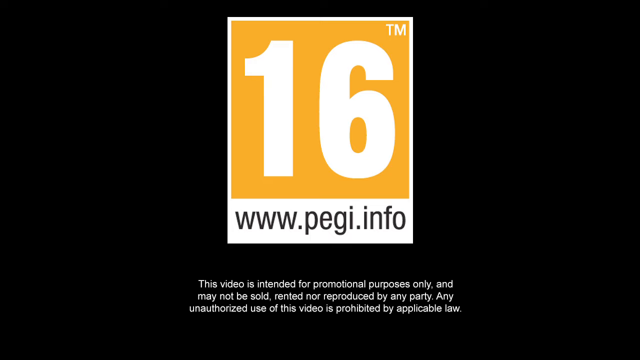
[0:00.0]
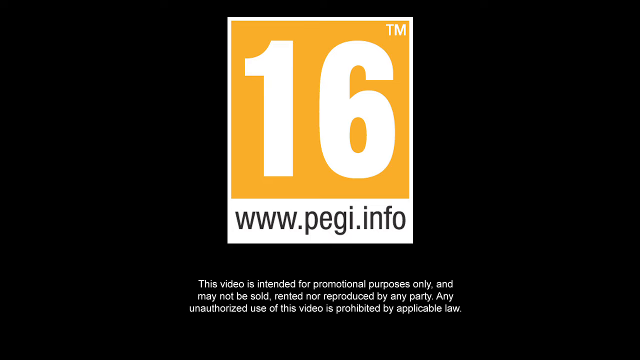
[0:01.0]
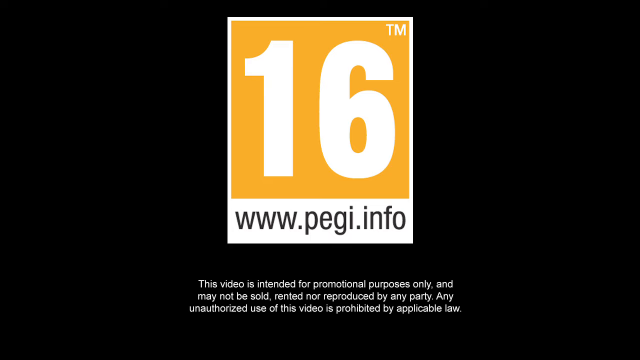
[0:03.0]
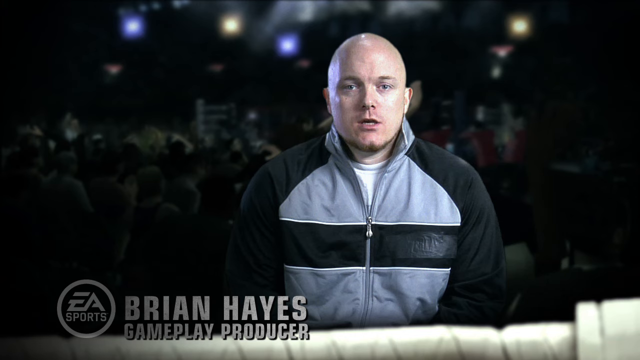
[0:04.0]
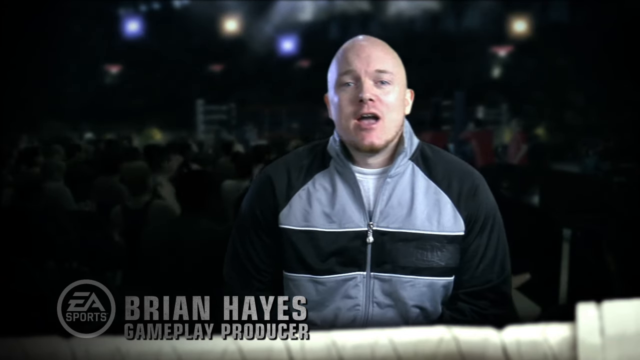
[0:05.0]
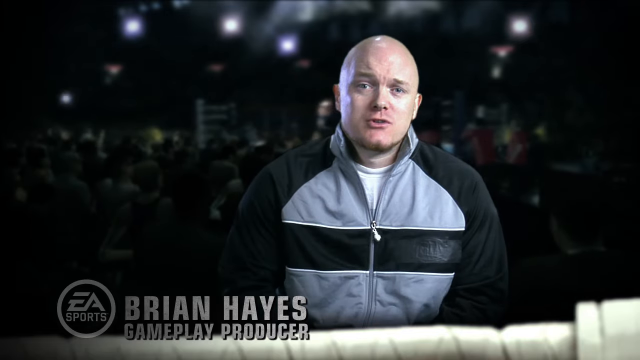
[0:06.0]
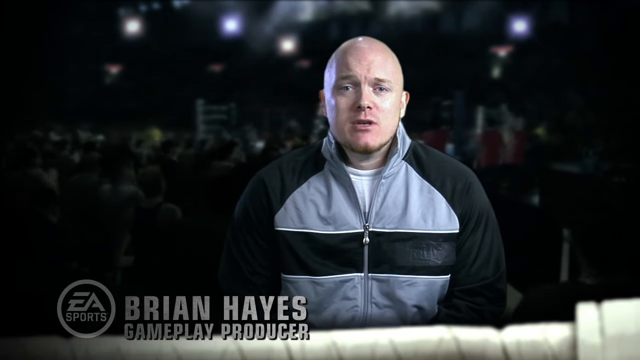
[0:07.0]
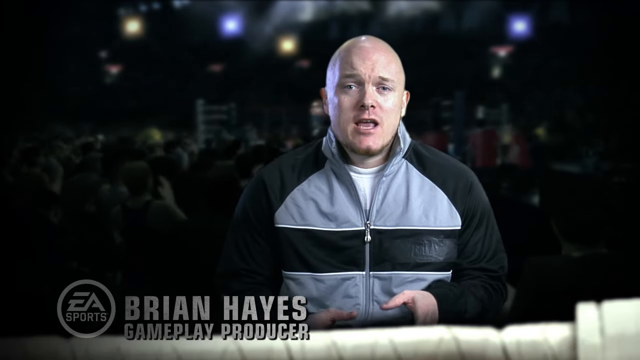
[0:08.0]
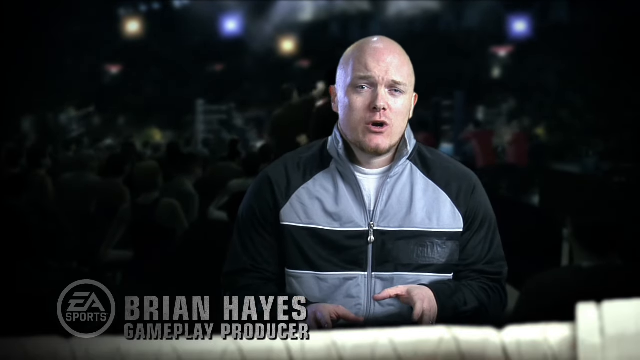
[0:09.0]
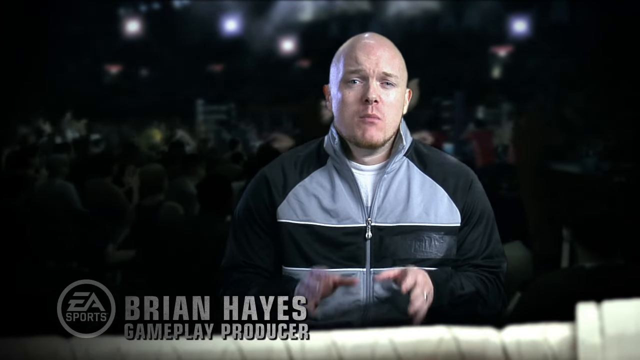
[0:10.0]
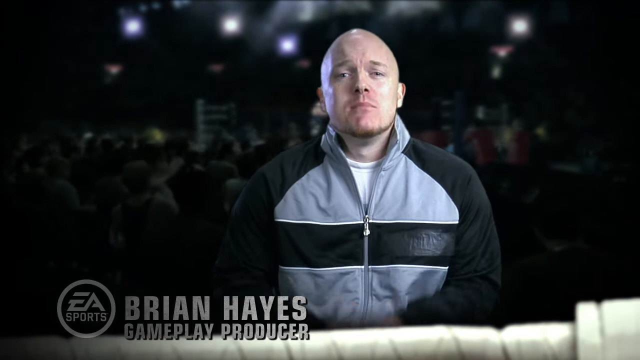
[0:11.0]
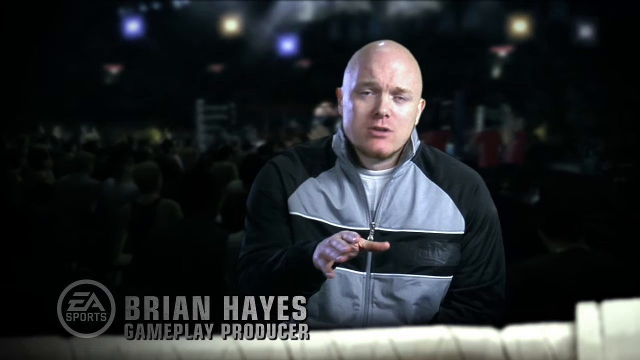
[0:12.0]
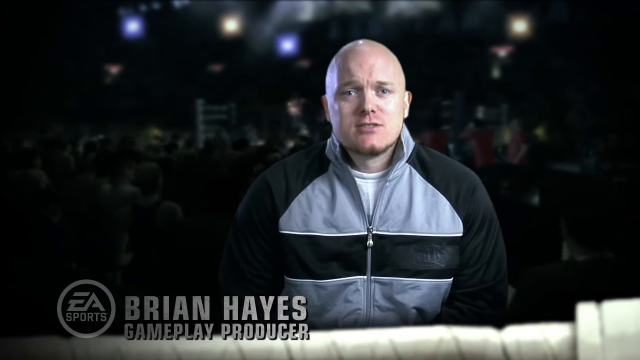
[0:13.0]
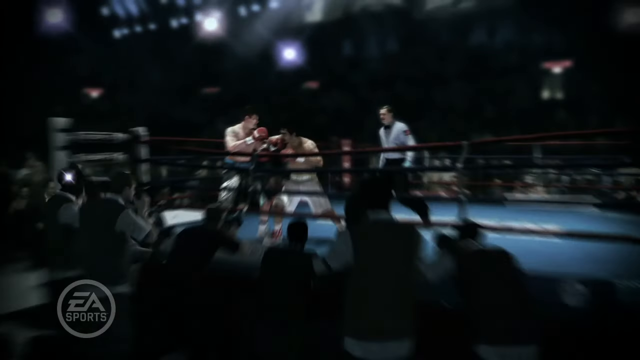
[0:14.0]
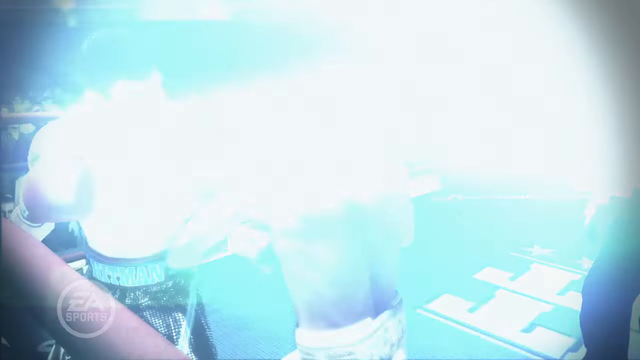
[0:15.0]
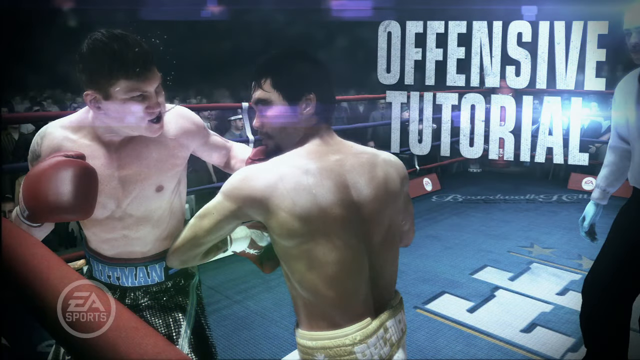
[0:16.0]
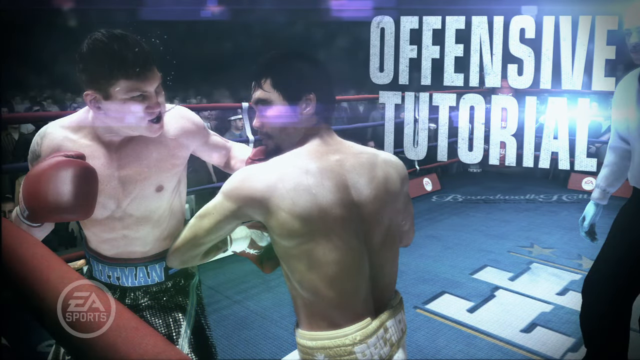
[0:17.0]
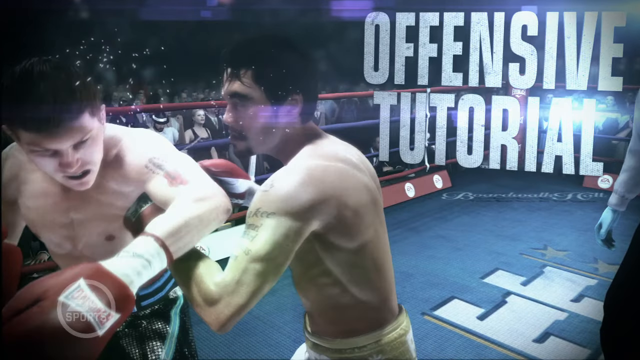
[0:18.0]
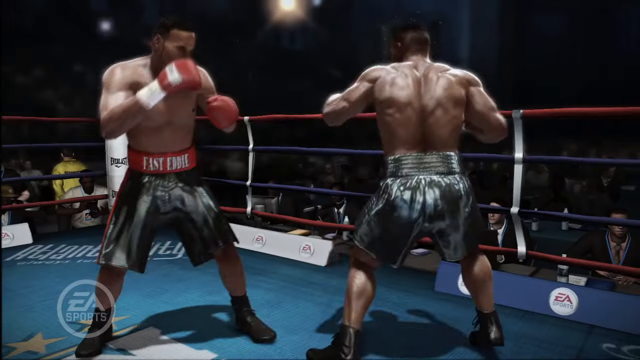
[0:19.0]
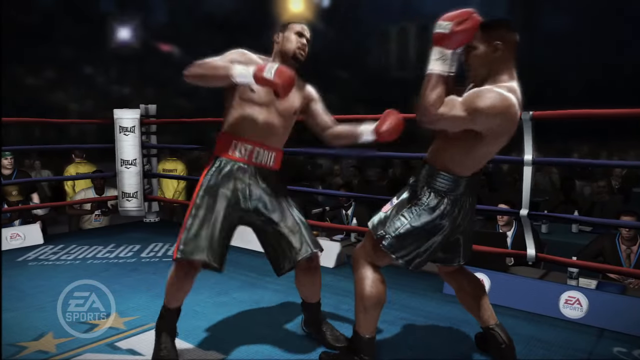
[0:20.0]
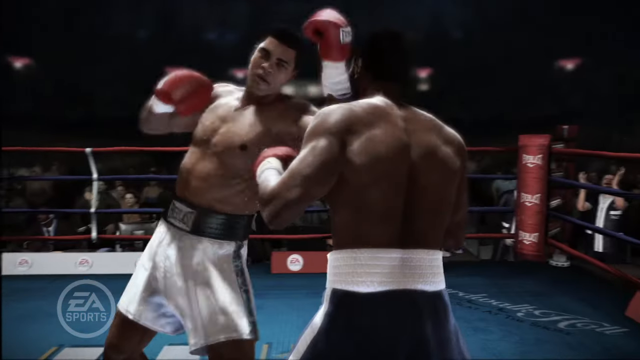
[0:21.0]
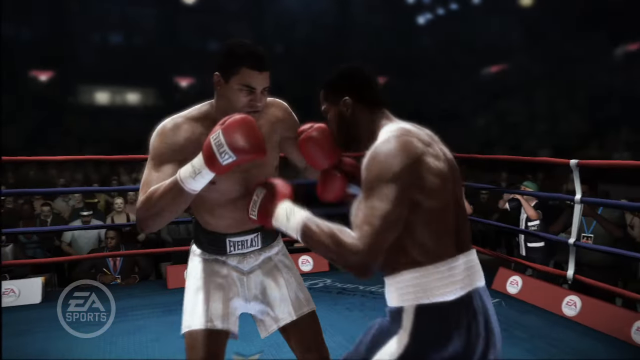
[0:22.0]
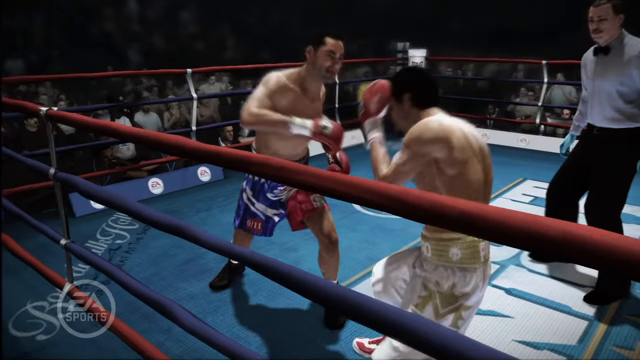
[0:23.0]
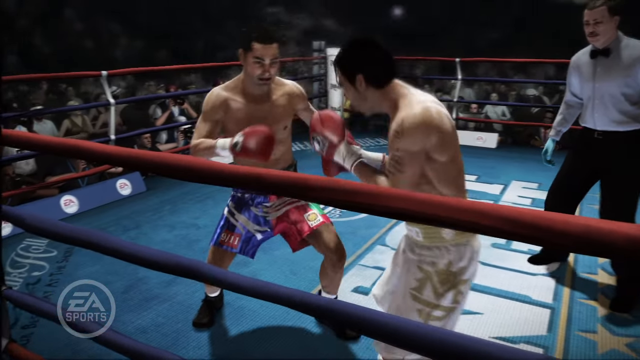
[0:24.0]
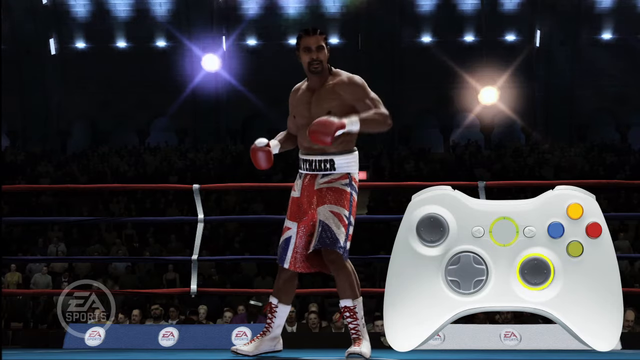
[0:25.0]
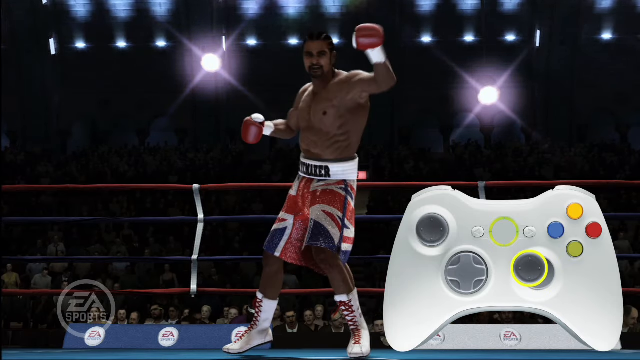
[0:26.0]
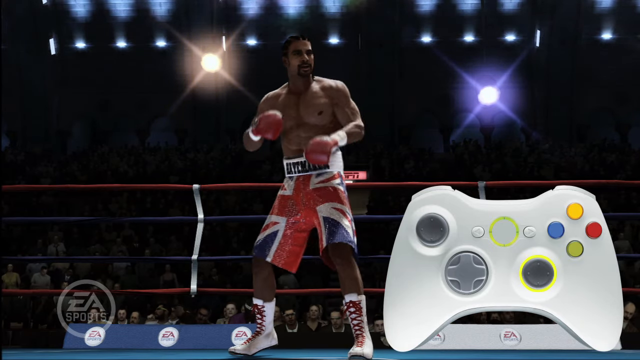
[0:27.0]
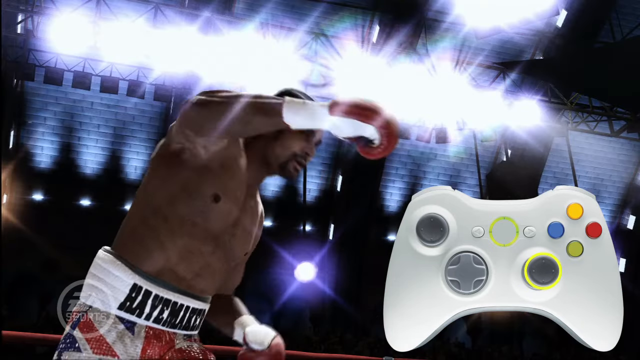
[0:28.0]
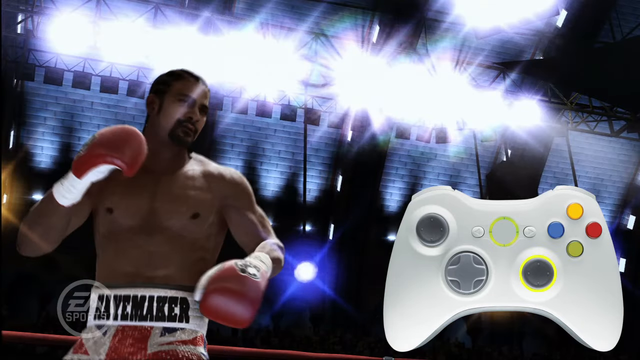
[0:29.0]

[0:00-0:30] The video opens on a black screen with a logo that reads "16TM www.peggy.info". It then cuts to what looks like an announcement at a sporting event; the game appears to be from EA Sports. Brian Hayes, the gameplay producer, is speaking, possibly about the match. He wears a black and gray zipper jacket with a black stripe across the chest. The view moves past him and zooms in on the action in the background, where a boxing match is underway. Both men swing at each other, wearing red boxing gloves with white wrist pieces and throwing punches left and right. The view then zooms in on one of the men, and an Xbox 360 controller appears on the right side, highlighting different moves made by angling the joystick in specific directions.